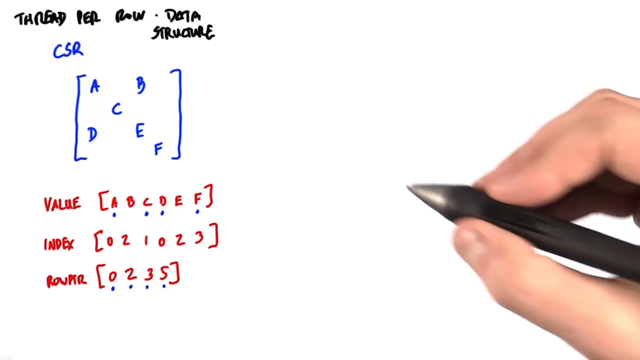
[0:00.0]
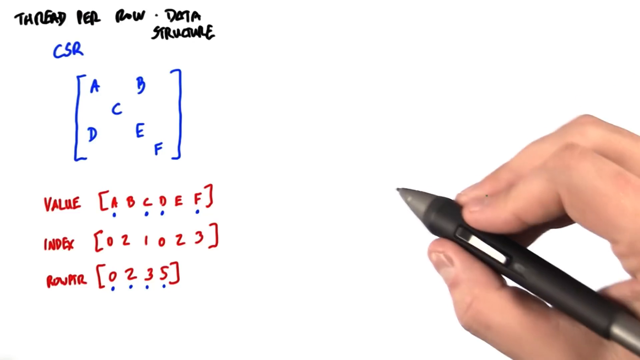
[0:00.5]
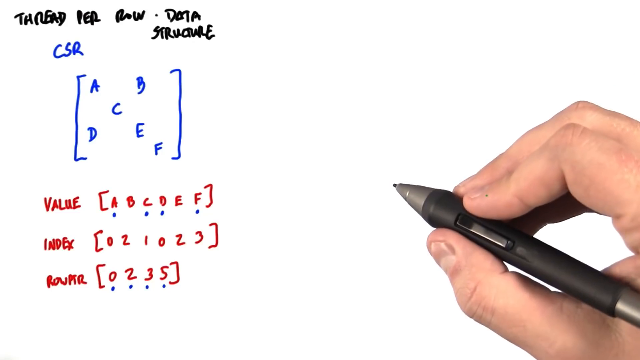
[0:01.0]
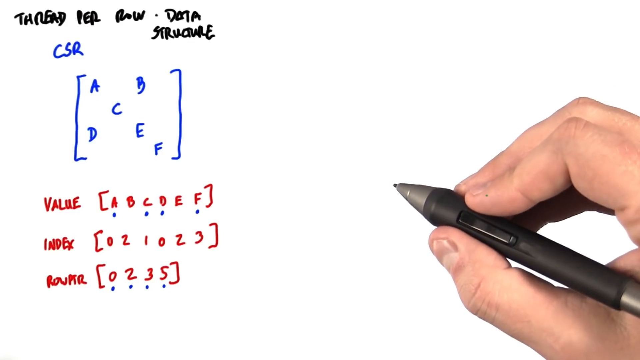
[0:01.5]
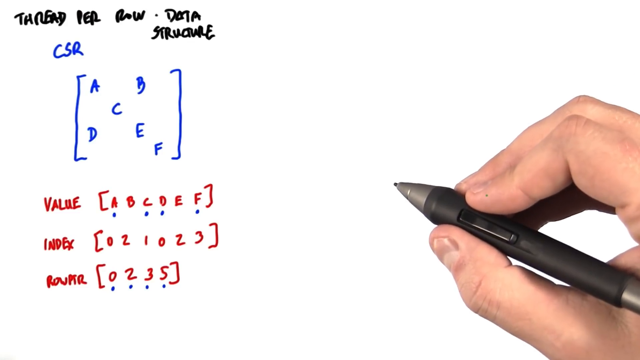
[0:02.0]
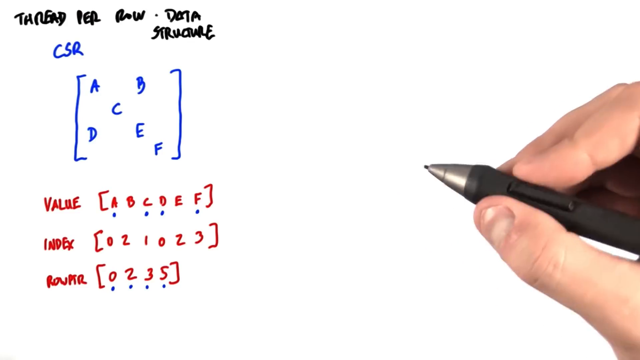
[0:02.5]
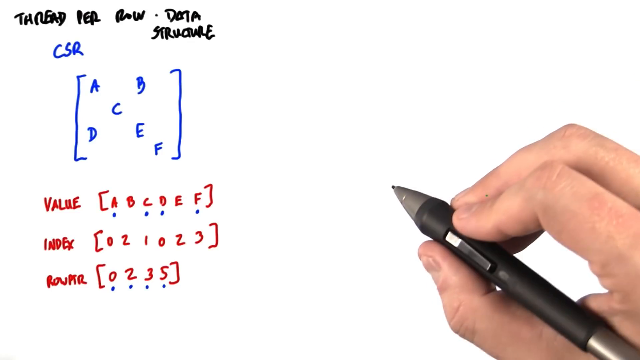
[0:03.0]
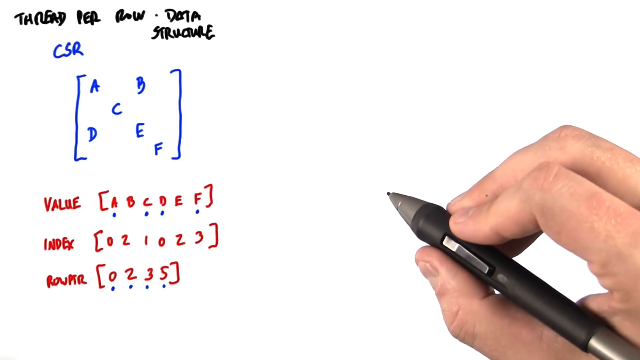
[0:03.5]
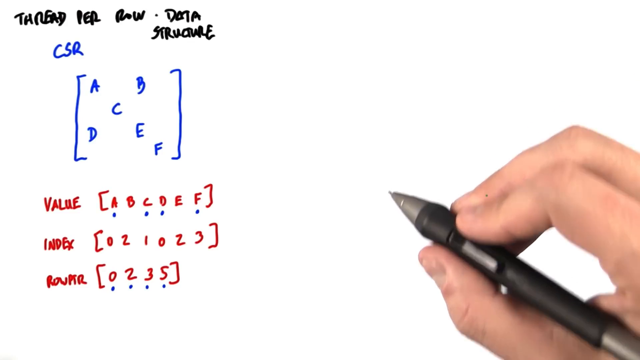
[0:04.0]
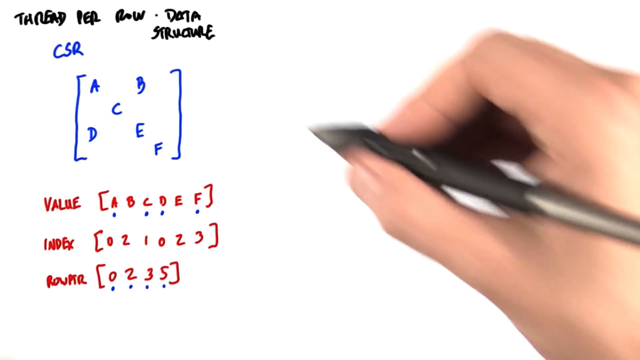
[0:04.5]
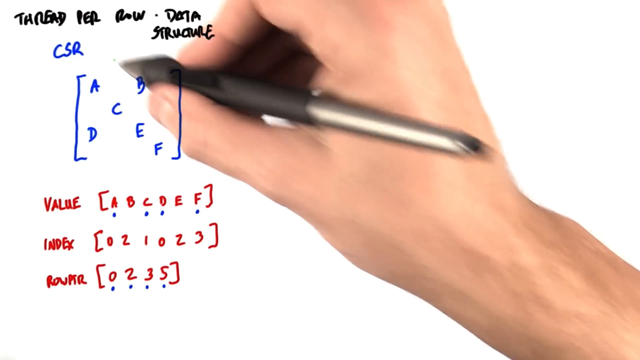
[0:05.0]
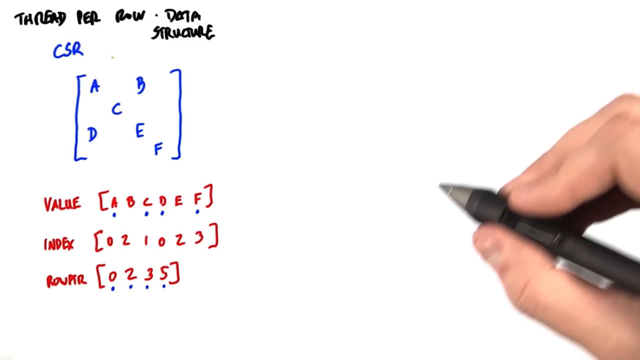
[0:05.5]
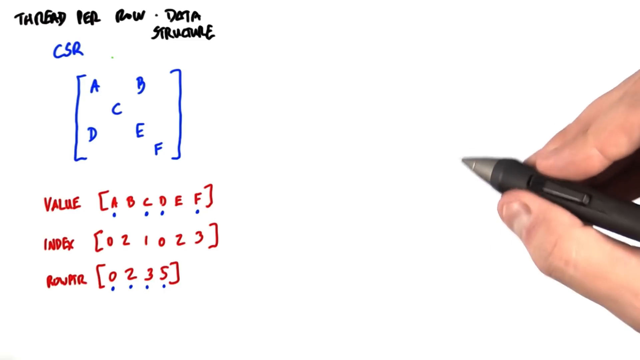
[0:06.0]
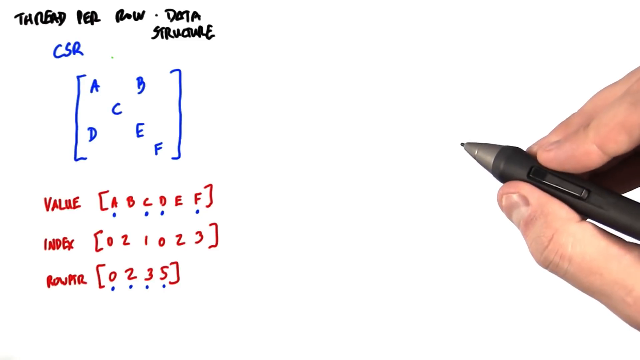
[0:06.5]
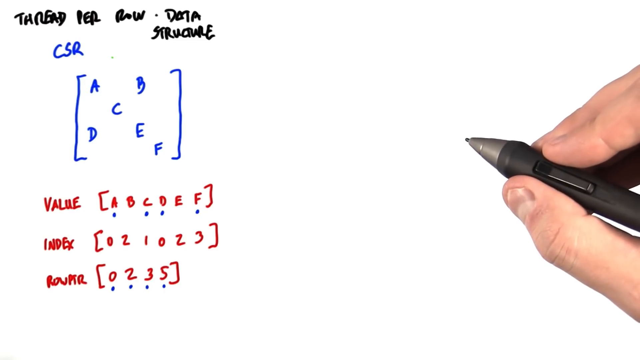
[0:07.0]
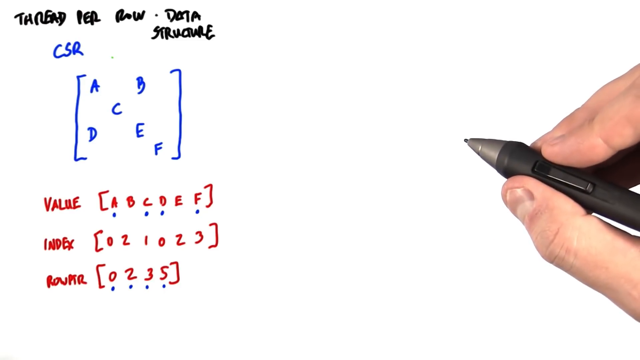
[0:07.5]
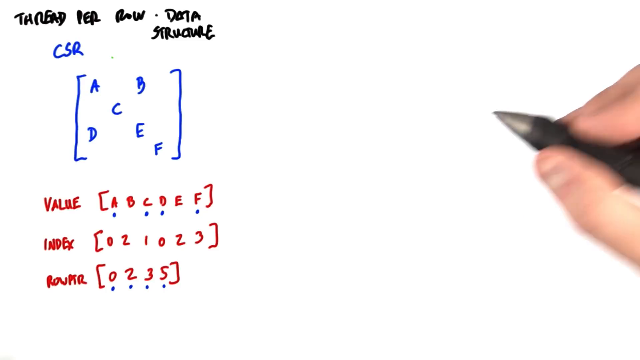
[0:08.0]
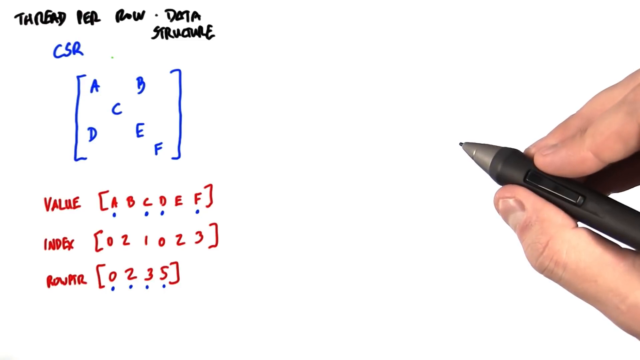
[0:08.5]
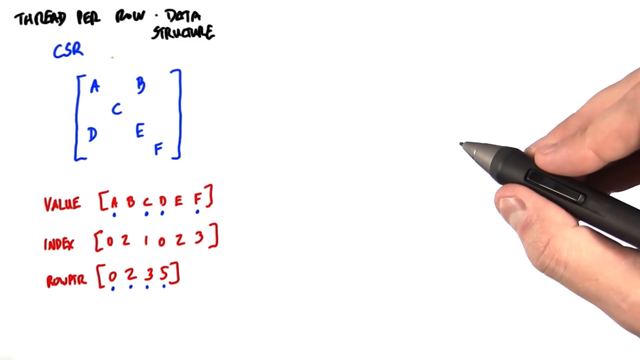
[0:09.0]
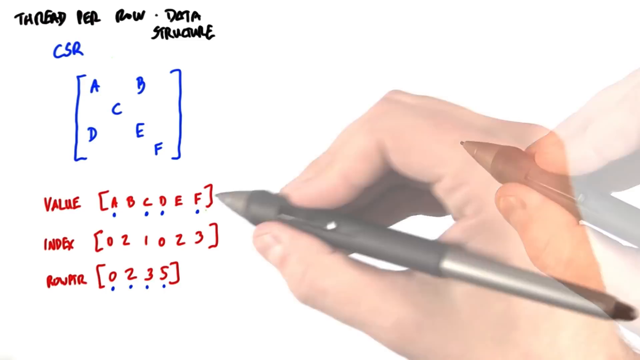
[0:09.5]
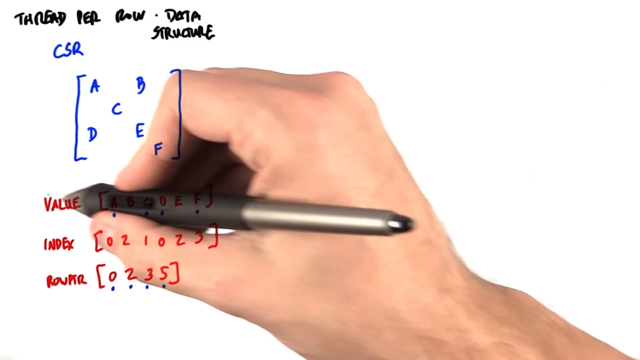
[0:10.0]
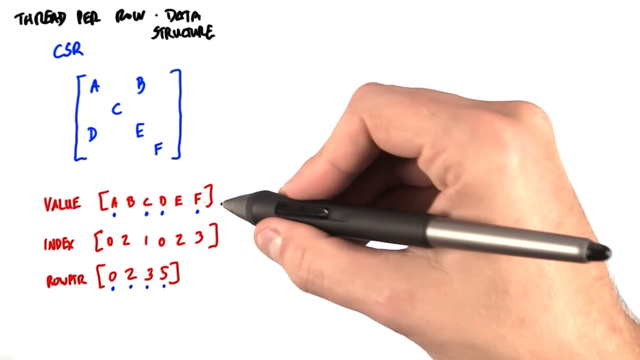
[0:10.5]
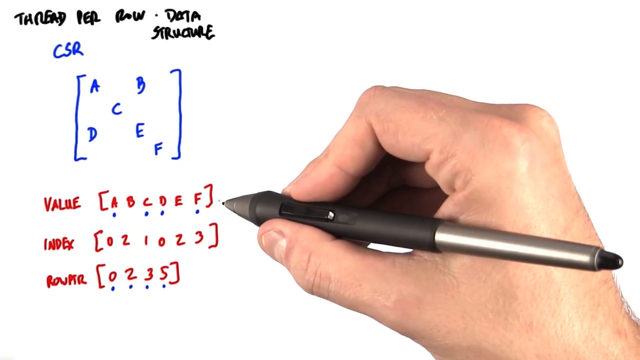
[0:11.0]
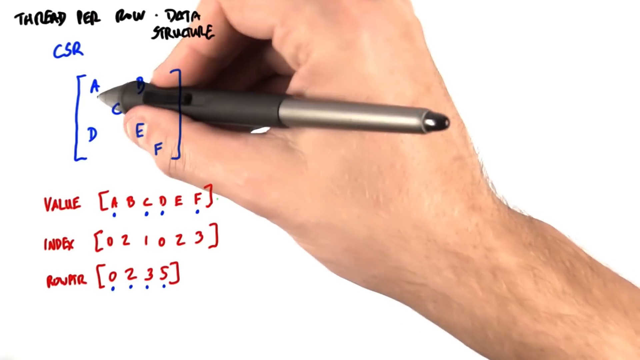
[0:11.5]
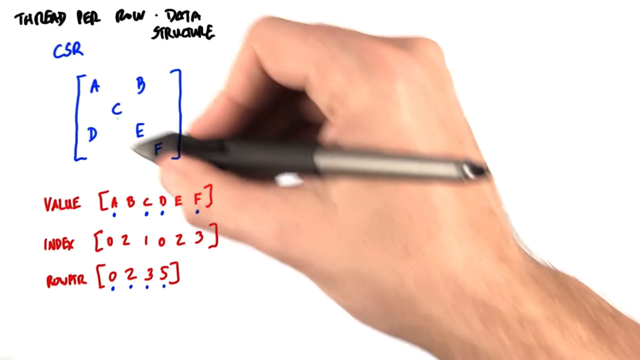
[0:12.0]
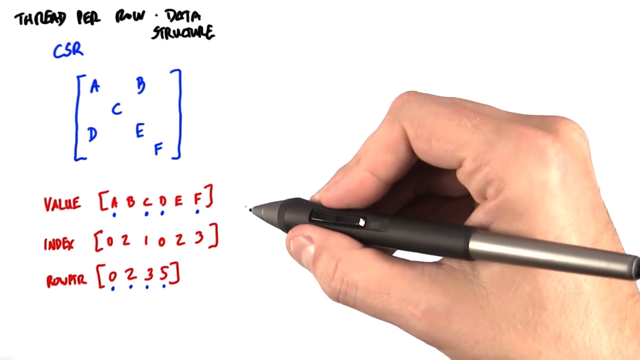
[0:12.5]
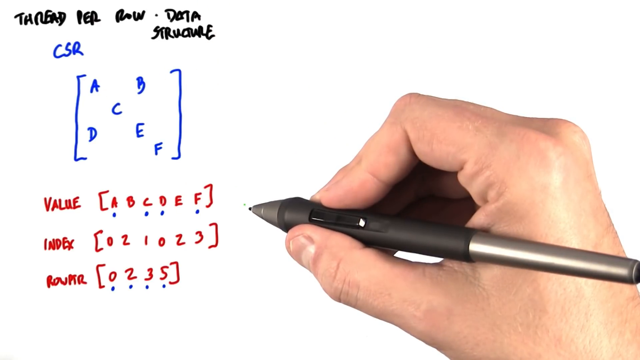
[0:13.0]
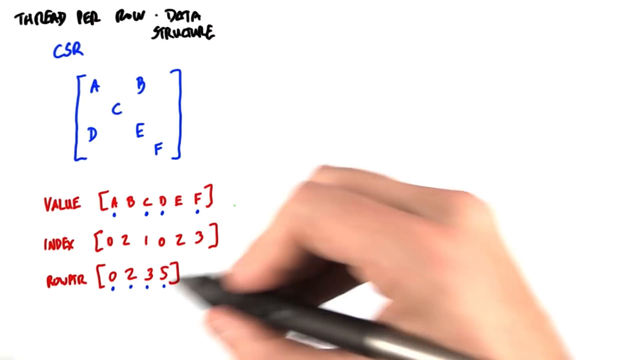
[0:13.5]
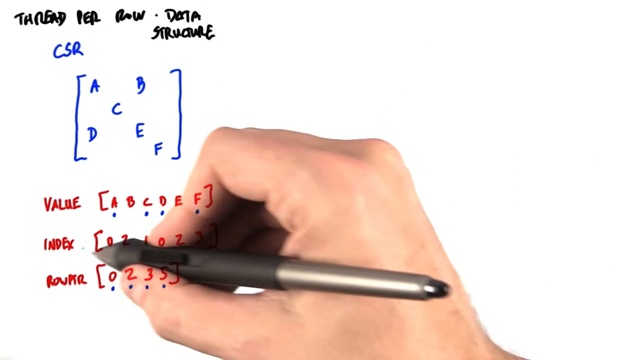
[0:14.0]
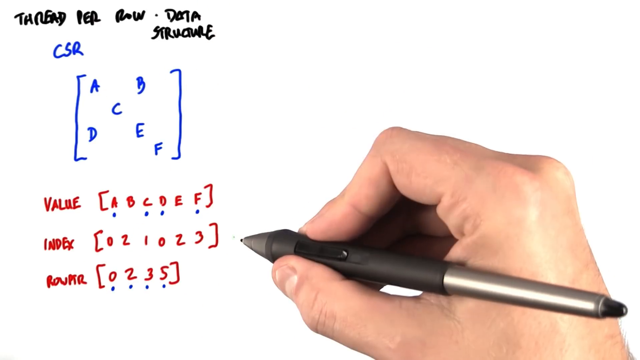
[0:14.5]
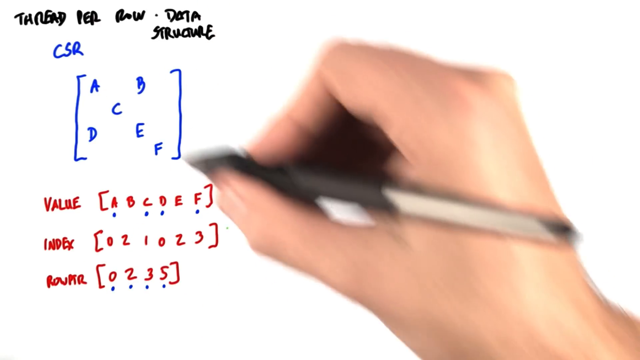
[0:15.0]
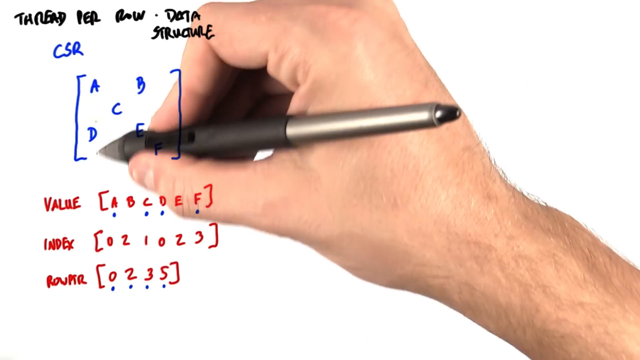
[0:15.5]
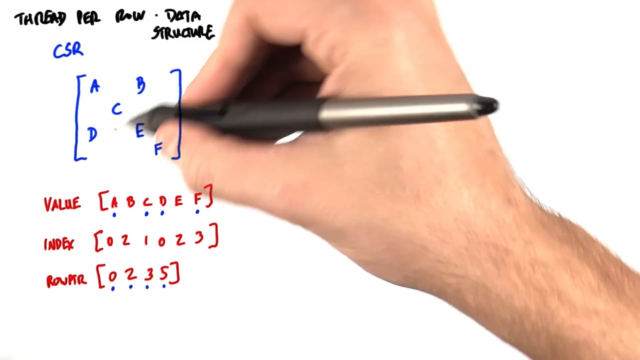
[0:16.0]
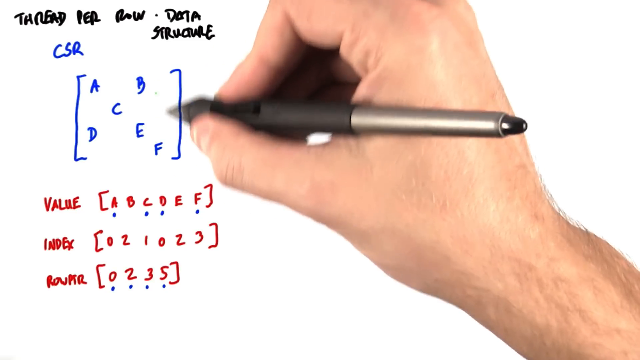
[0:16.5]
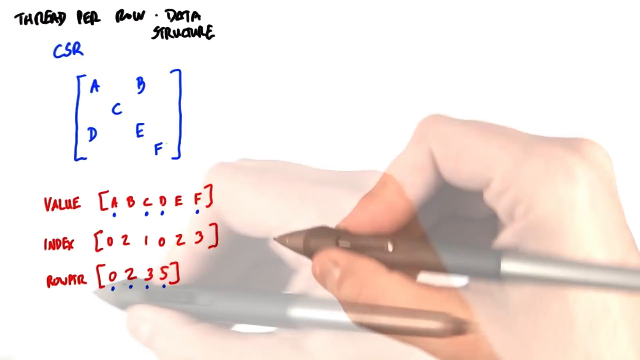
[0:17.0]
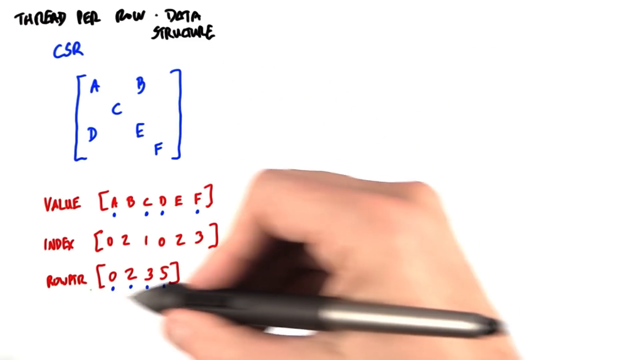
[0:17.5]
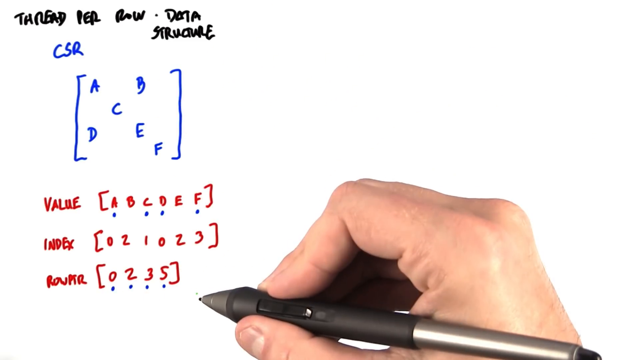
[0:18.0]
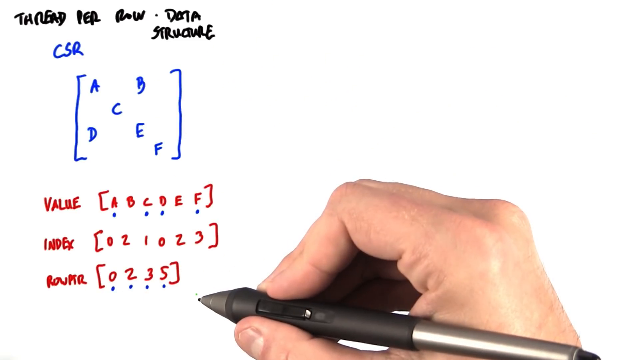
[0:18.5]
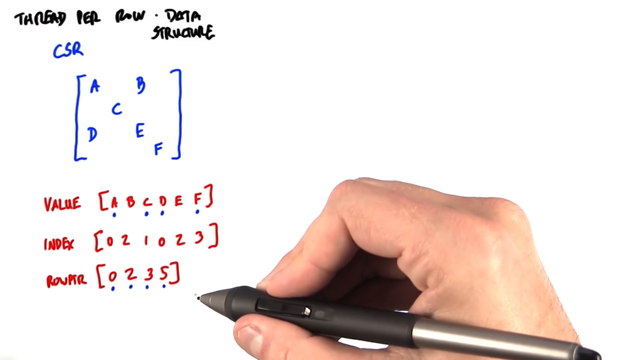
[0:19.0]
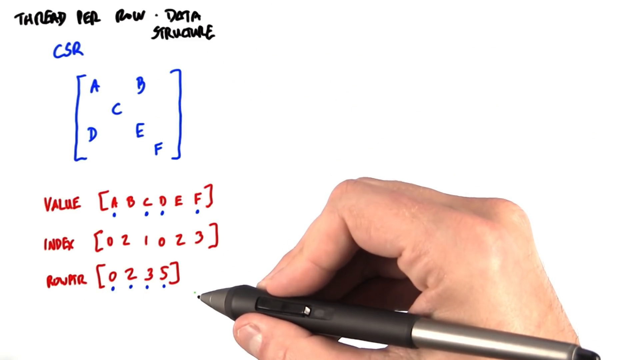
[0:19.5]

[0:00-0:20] A diagram is on the left of the scene, and a hand is at the bottom right, holding a dark charcoal gray pen pinched between the index finger and thumb. The screen is dark gray, fading up into white just below the thumbnail of the hand. On the left side are drawn letters: "thread per row data structure" written in black, and below that "CSR" in blue. Below it, bracketed in blue in a square shape, are the letters A at the left, B at the upper right of the box, C in the middle, D directly under A, E under B, and F slightly down and off to the bottom right, all apparently in blue. Below that is the word "VALUE" in red, all uppercase; all the letters are uppercase. Next to it, bracketed, are A through F, with blue dots underneath A, C, D and F. Below that, again in red uppercase, is the word "INDEX", followed by "021023" in brackets. Then there is something that looks like "ROVAR", followed by "0235" in brackets with a blue dot underneath each number. The hand pulls back slightly with the pen, trying to get a better grip on it, then moves it around as if about to write and points at the different letters. It points to CSR with the hand moving back and forth, points over the values and over various letters among A, B, C, D, then points over the bottom row, 0235, and underlines those numbers with the pen.